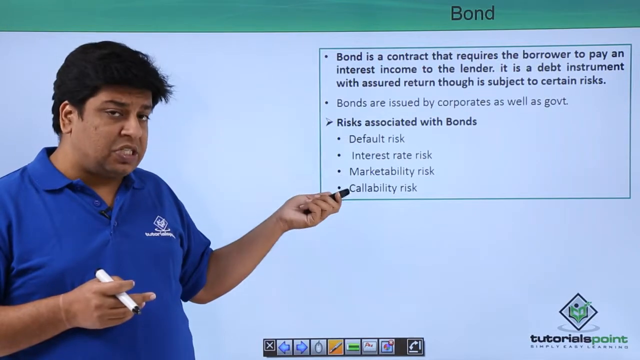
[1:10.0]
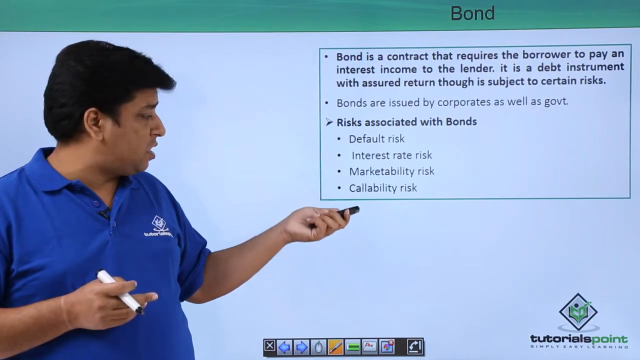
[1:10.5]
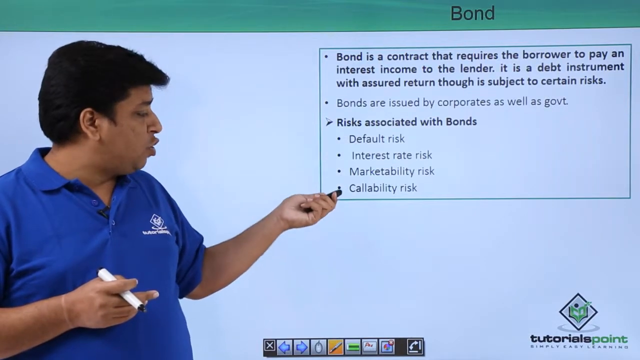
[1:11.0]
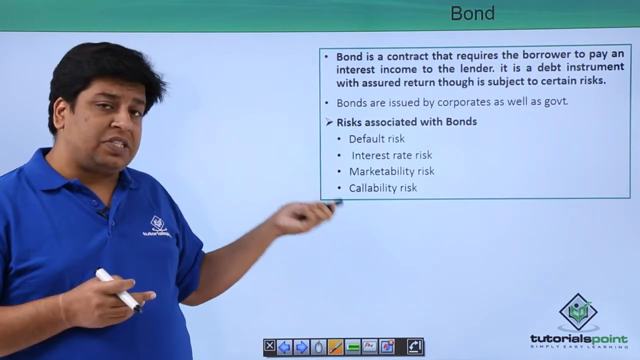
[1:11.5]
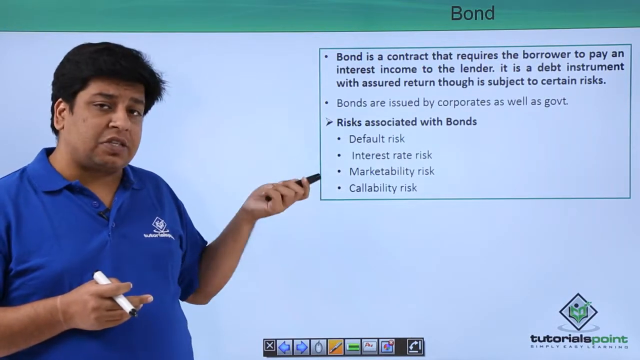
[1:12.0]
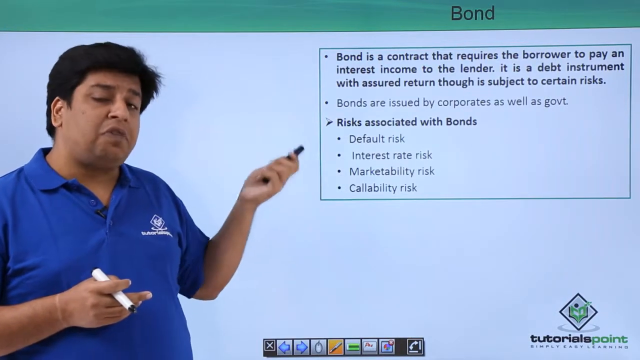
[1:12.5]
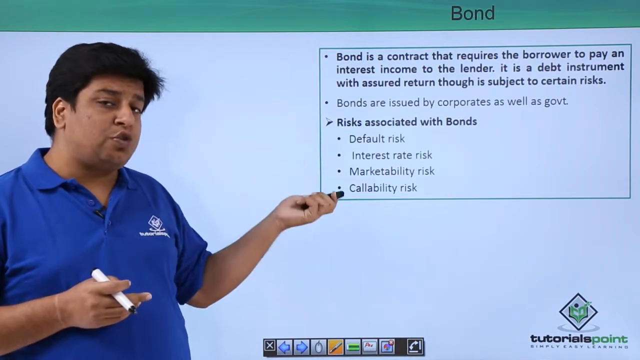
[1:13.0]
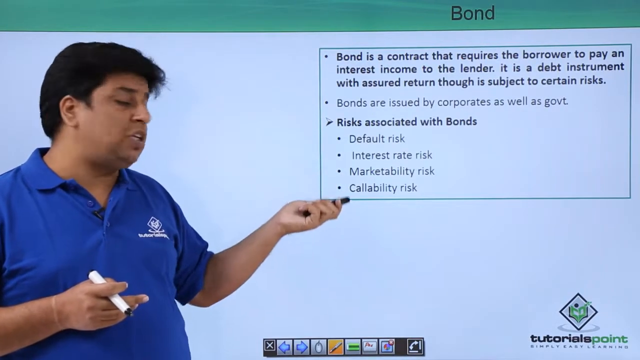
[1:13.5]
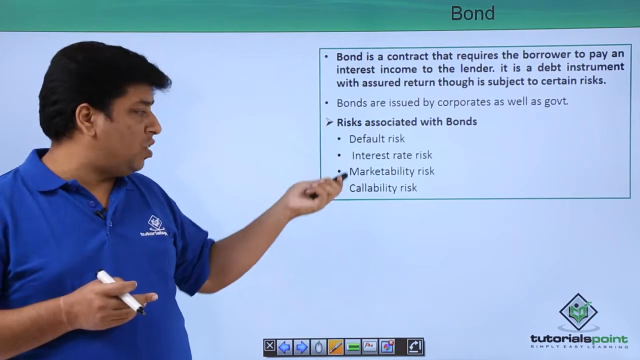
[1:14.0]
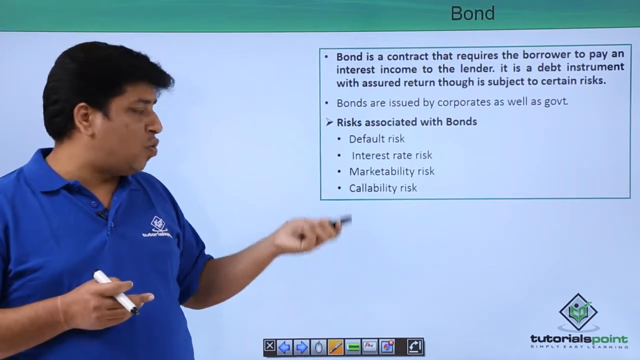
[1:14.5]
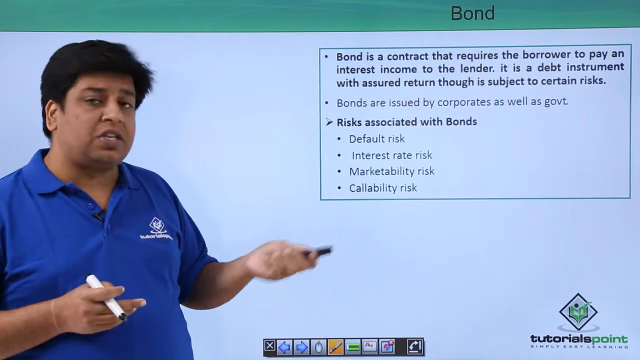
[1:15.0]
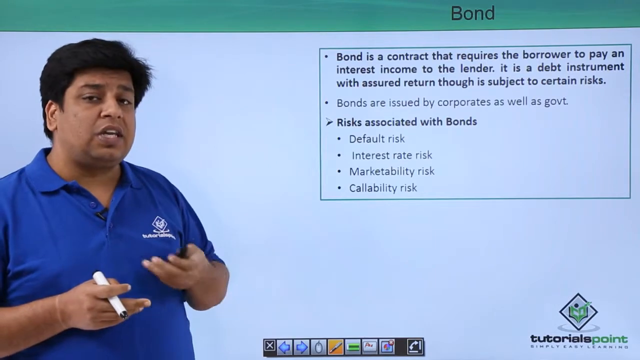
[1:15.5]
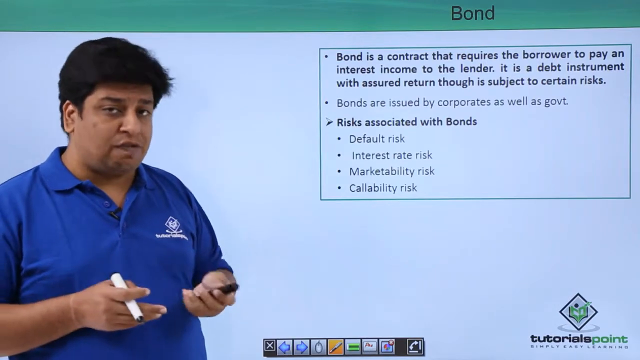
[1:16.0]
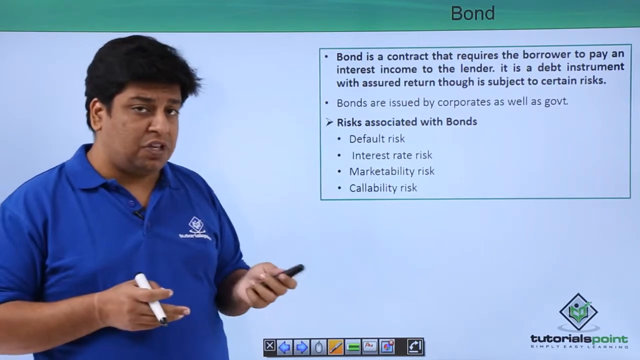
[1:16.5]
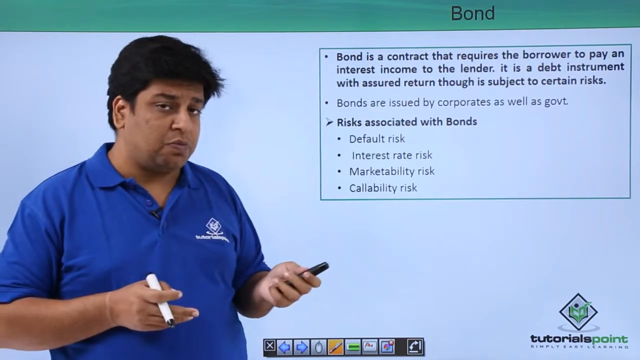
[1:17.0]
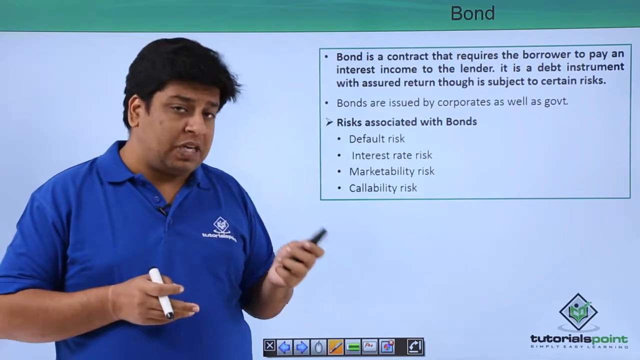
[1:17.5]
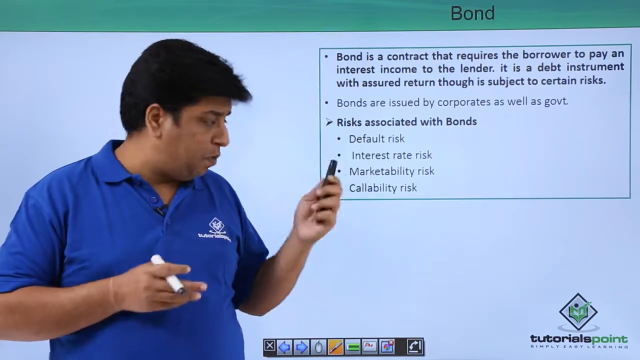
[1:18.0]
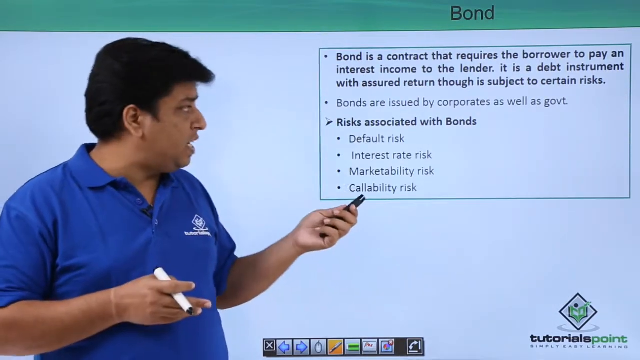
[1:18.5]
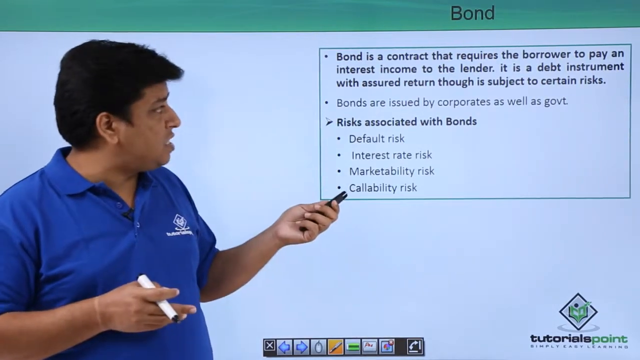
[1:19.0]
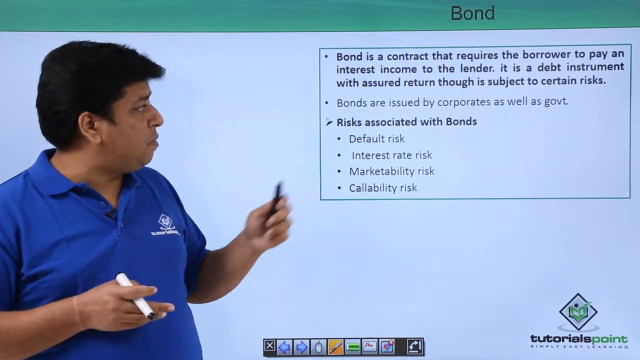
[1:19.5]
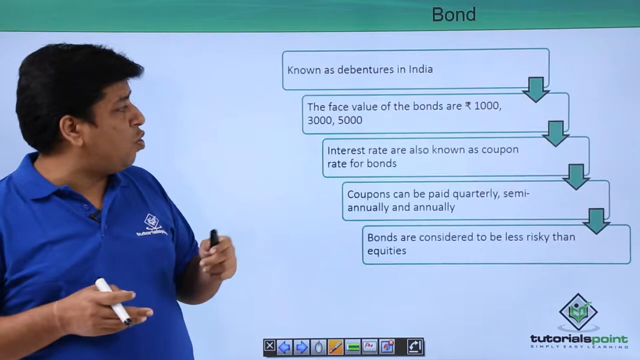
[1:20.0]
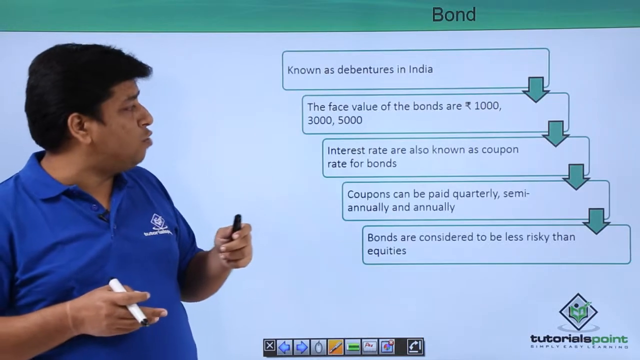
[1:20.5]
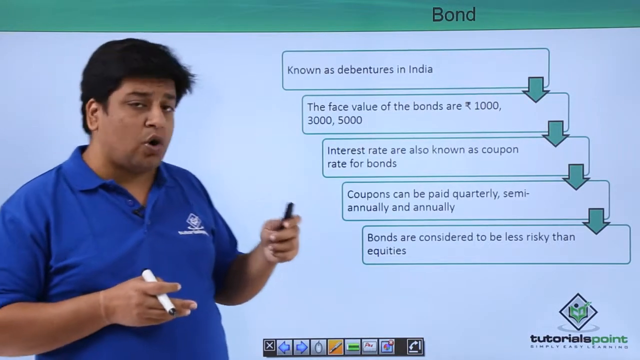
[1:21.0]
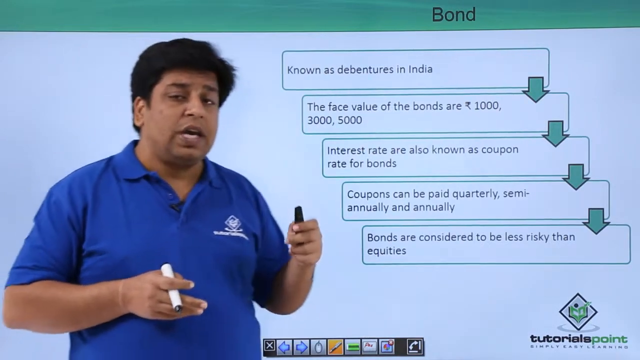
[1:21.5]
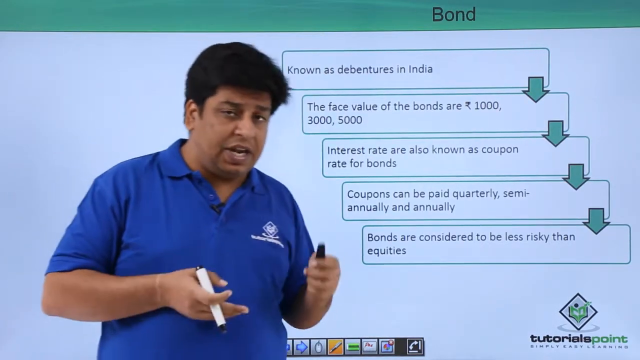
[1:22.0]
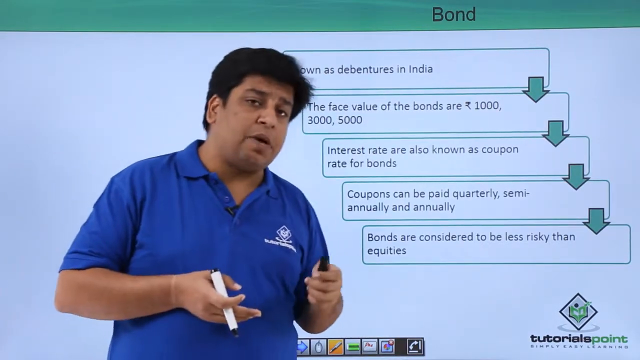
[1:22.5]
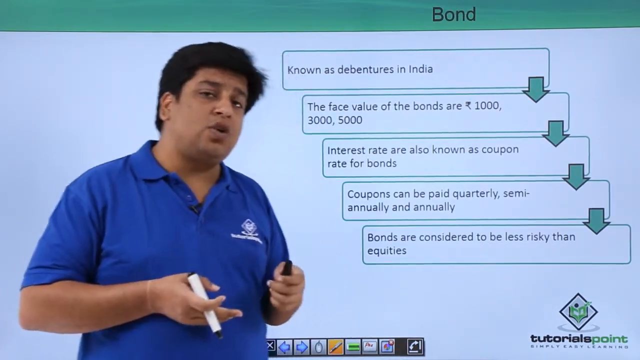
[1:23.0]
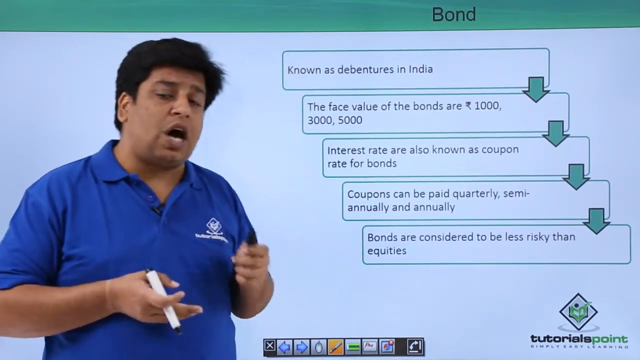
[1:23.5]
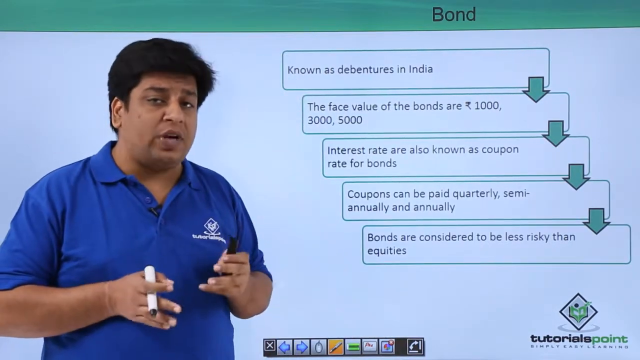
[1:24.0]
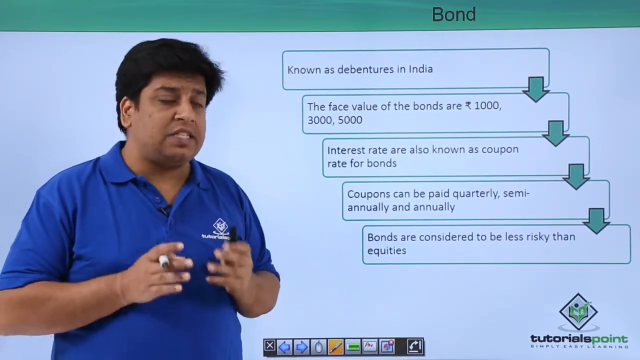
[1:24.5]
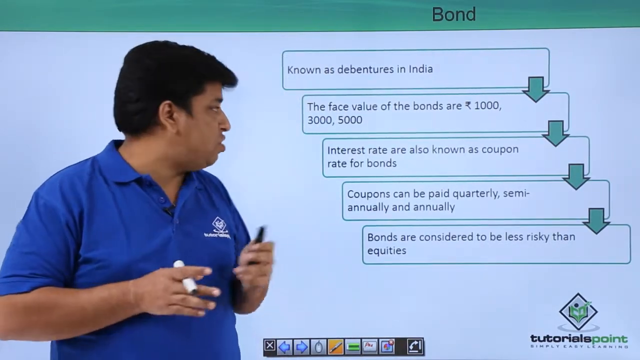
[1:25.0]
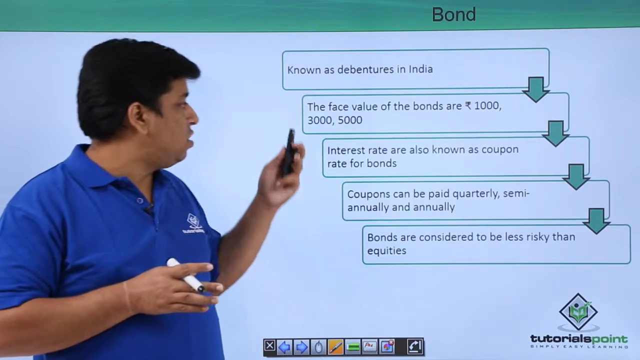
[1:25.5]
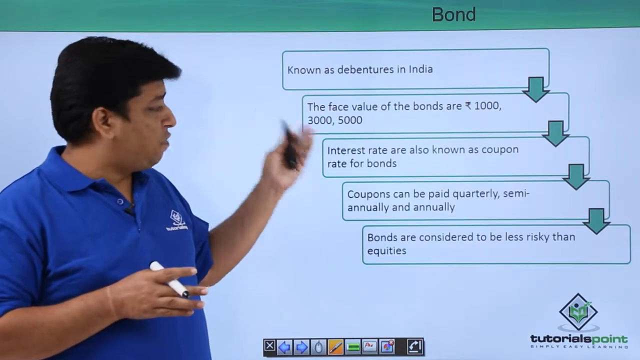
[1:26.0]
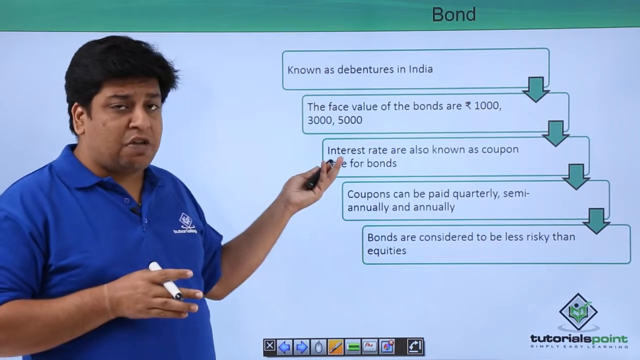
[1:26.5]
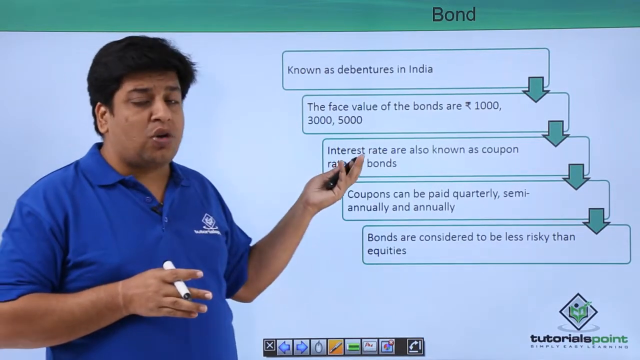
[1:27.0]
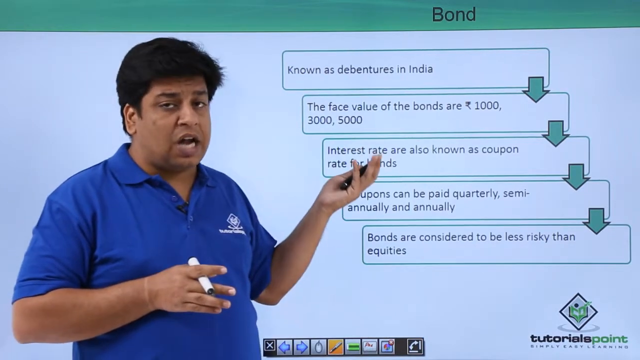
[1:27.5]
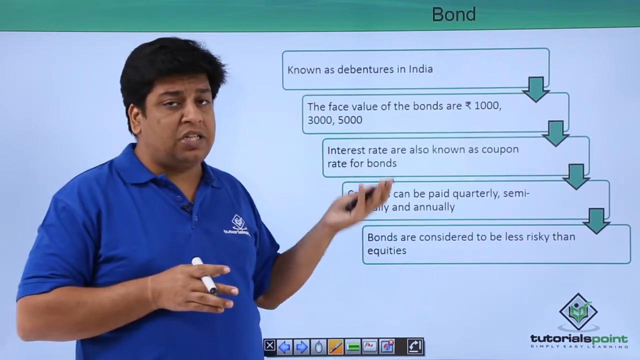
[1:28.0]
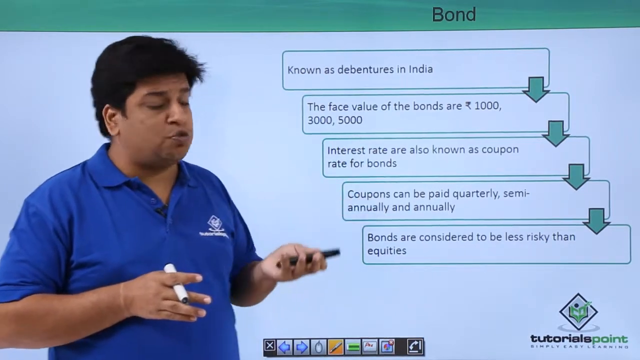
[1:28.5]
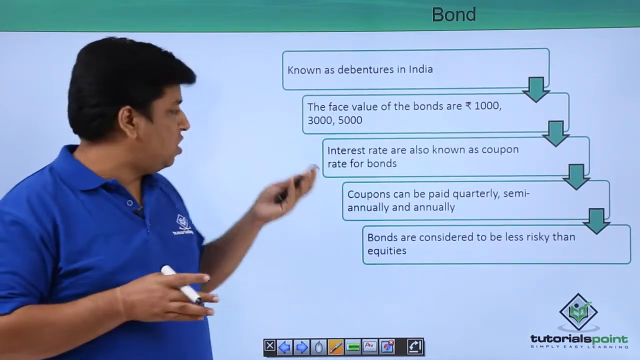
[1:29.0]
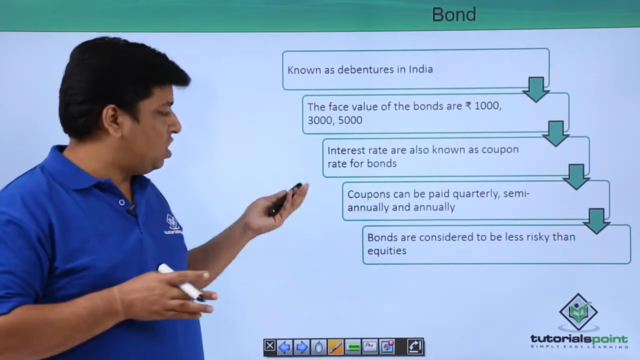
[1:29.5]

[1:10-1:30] The Indian man on the left side of the screen wears a blue polo shirt with a company logo on the left breast. He holds a marker in his right hand, and in his left hand he appears to hold a laser pointer or a device for advancing slides. He has kind of poofy black hair. He reads the definition on the right side of the screen: "bond is a contract that requires the borrower to pay an interest income to the lender. It is a debt instrument with assured return, though is subject to certain risks. Bonds are issued by corporates as well as governments. Risks associated with bonds, default risk, interest rate risk, marketability risk and callability risk." He continues speaking to these points. He then switches to a new slide with kind of descending labels and arrows pointing to the next point. It begins with "known as debentures in India", followed by "the face value of the bonds are 1000 rupees, 3000, 5000", "interest rates are also known as coupon rate for bonds", "coupons can be paid quarterly, semi-annually and annually" and "bonds are considered to be less risky than equities".